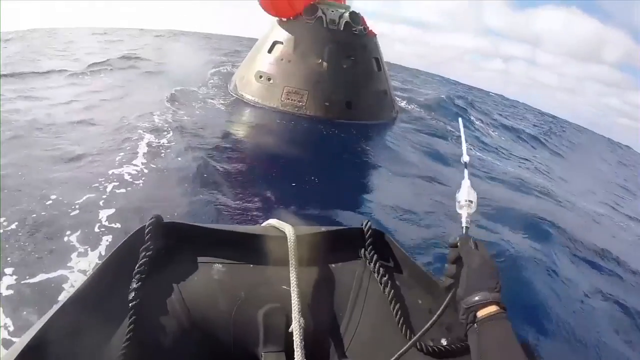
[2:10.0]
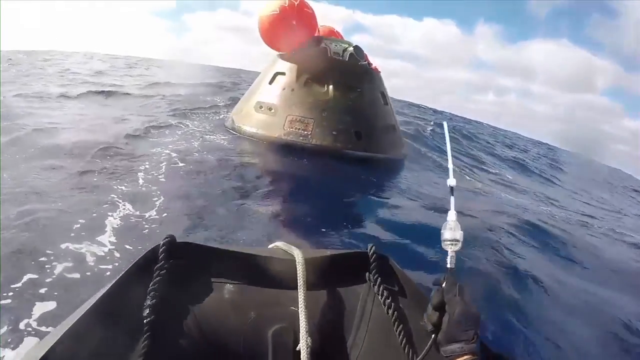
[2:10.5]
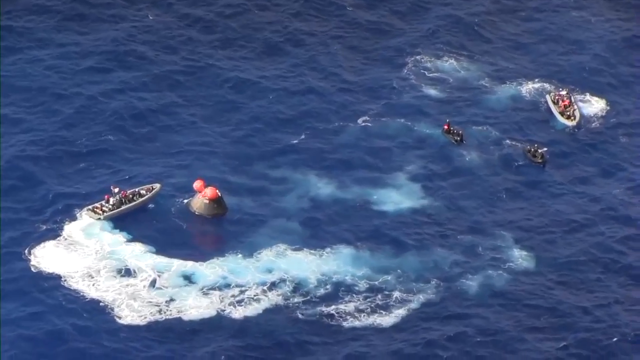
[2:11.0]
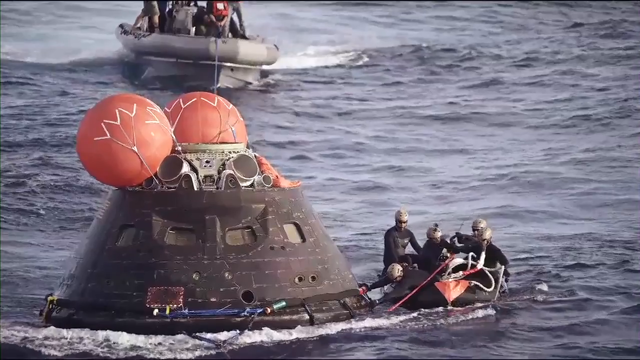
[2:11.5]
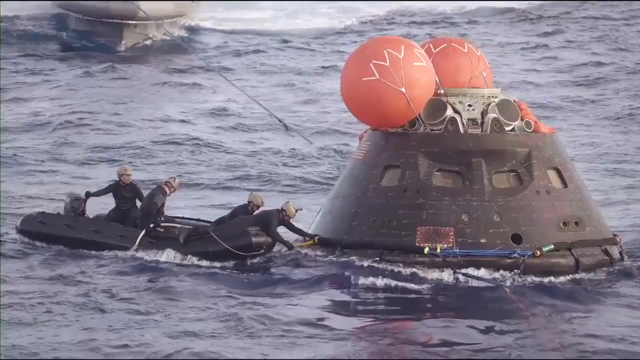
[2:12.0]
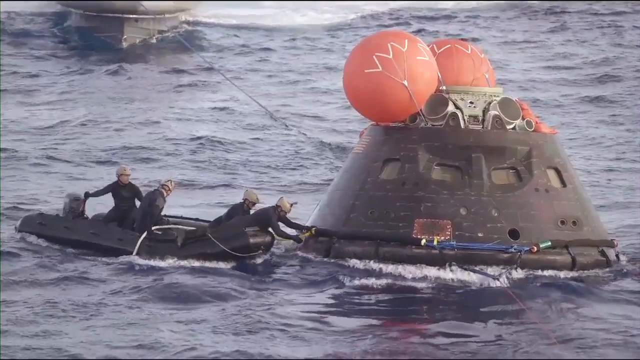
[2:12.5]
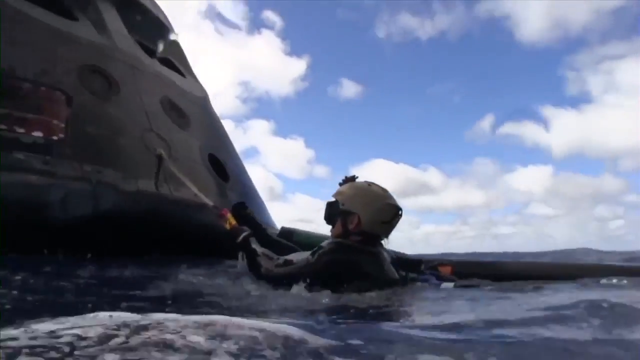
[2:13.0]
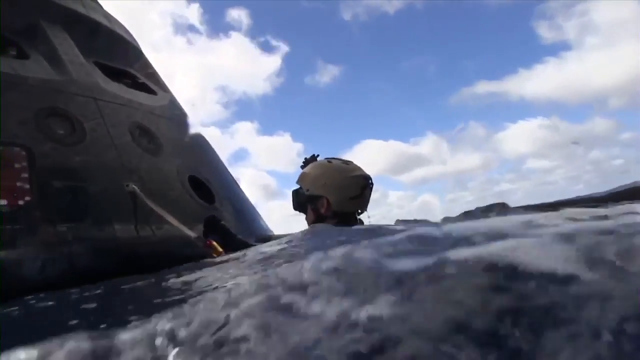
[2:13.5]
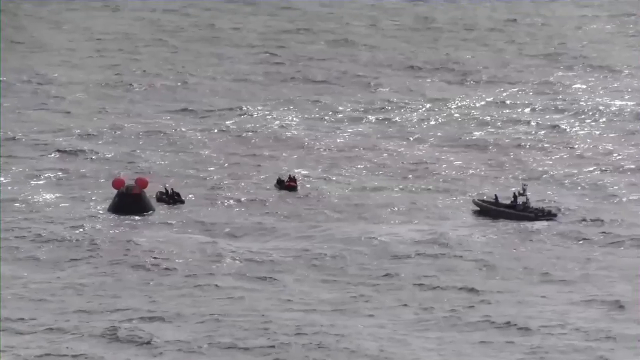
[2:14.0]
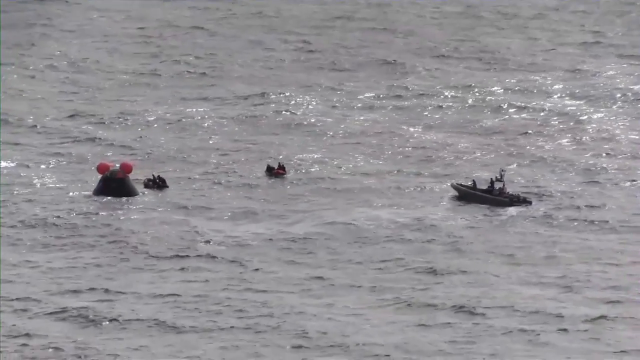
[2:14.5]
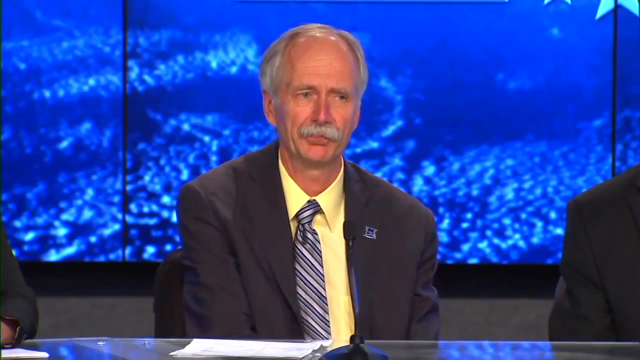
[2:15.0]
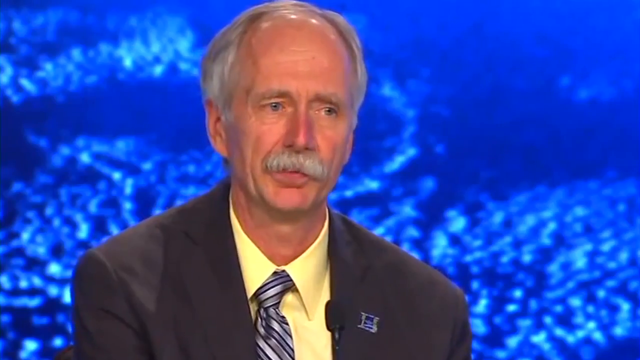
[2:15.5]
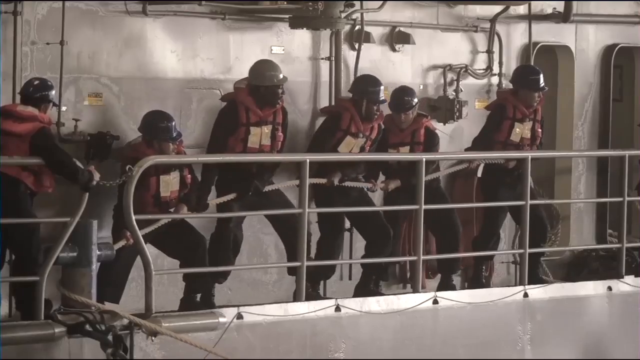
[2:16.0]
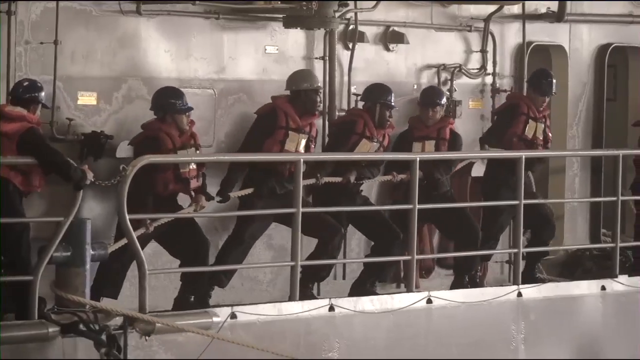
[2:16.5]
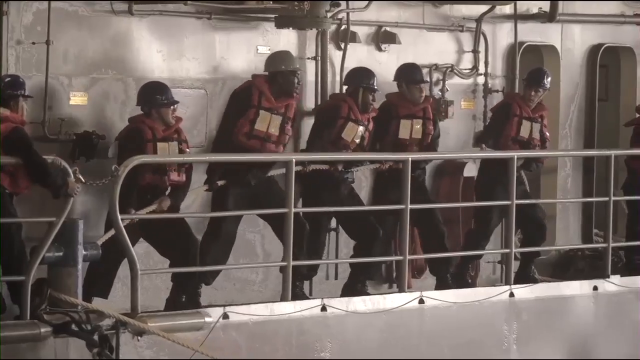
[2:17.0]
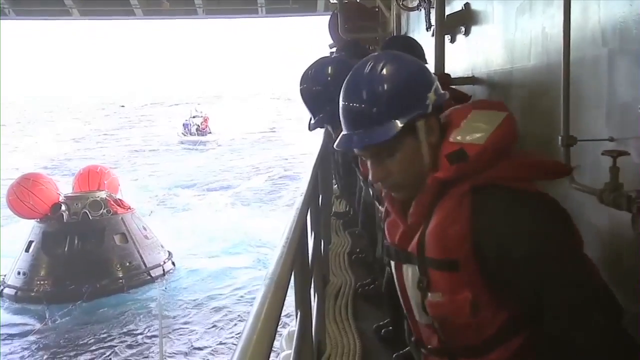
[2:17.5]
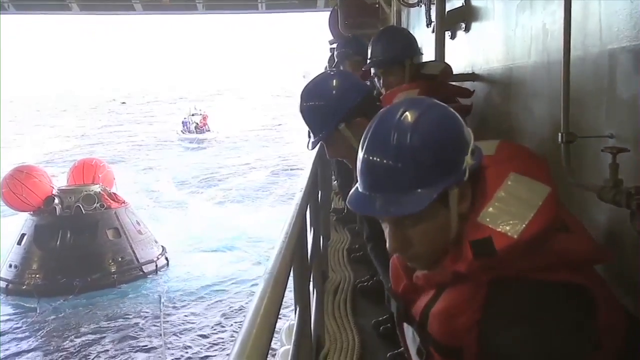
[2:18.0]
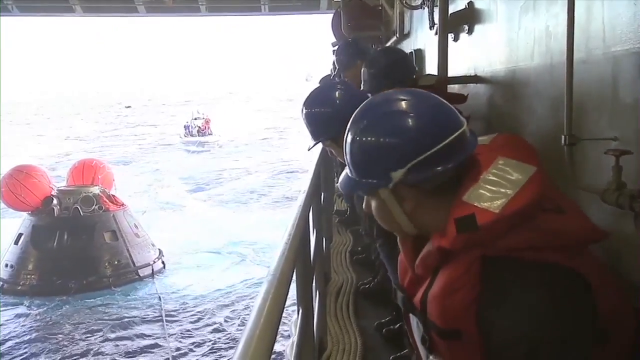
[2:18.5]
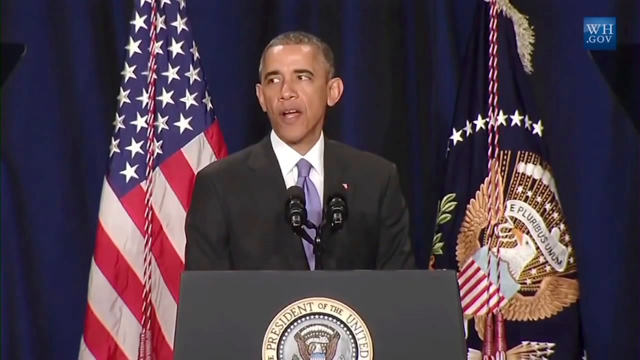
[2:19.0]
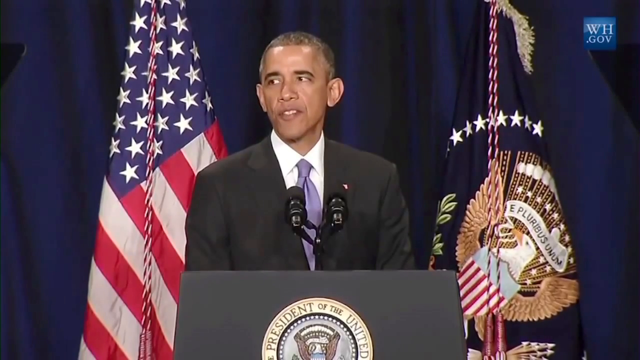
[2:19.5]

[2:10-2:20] Small boats approach the heat shield as it bobs on the surface of the water, and the crews attach ropes to it. Two orange buoys are on top of the heat shield. Various angles show the crews attaching the ropes. One dinghy has at least five people in it, another is in the distance, and some of the people jump into the water to help attach the ropes. After some interview footage, the scene returns to the ship, where a row of men aboard the main ship pull on the rope attached to the heat shield to bring it aboard for recovery.